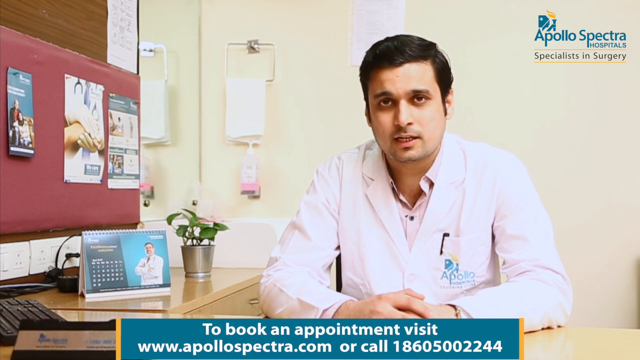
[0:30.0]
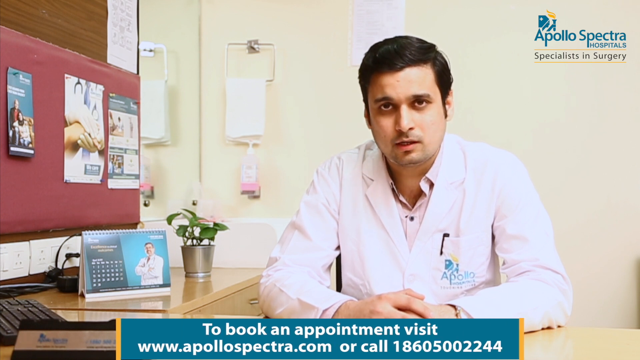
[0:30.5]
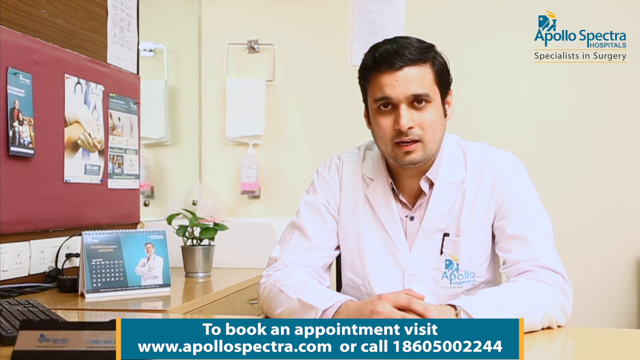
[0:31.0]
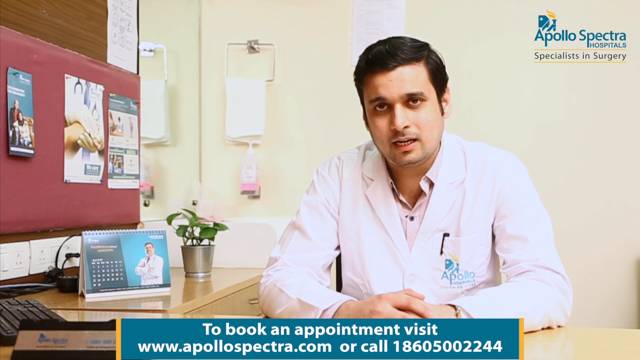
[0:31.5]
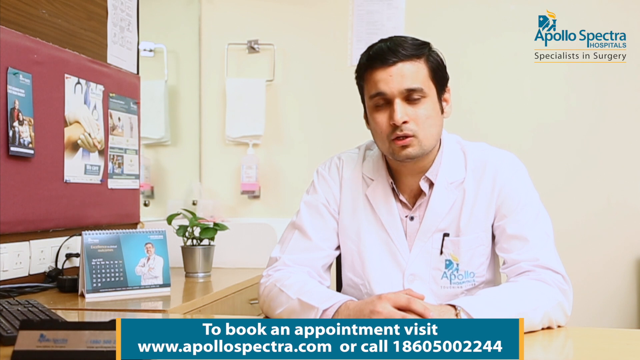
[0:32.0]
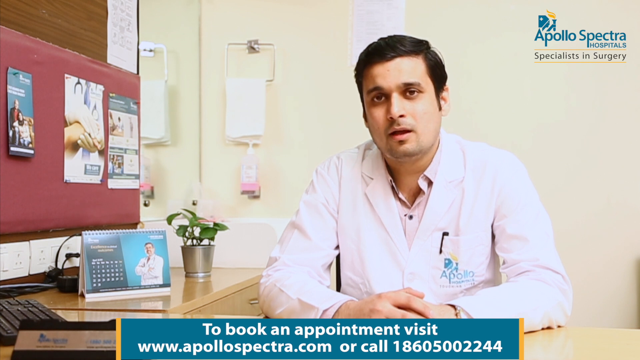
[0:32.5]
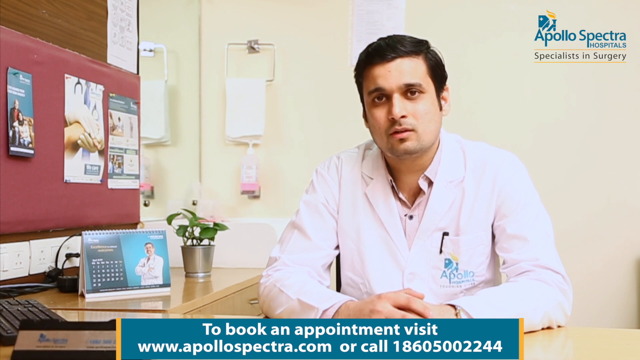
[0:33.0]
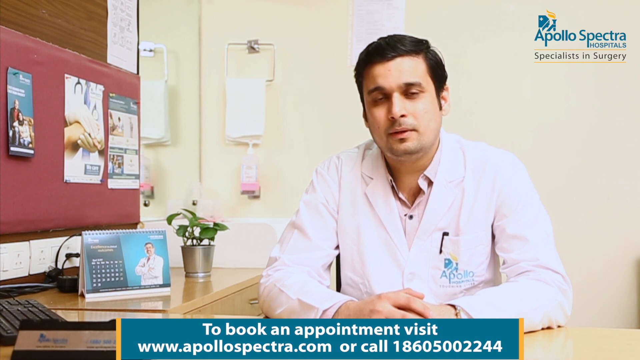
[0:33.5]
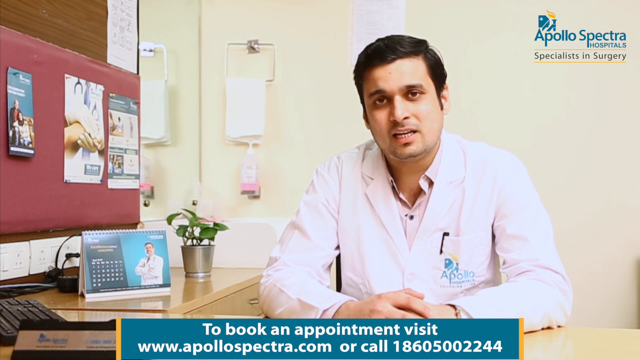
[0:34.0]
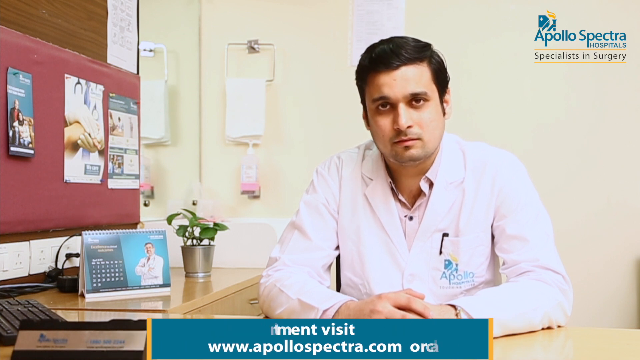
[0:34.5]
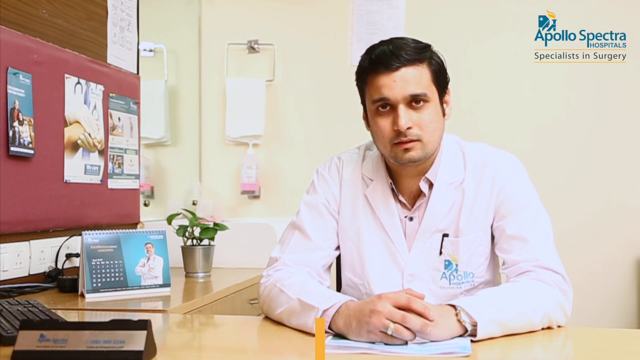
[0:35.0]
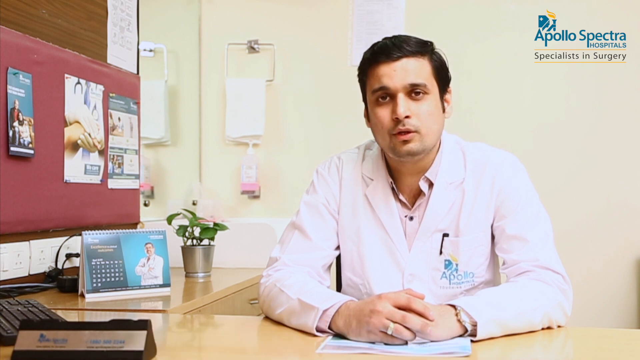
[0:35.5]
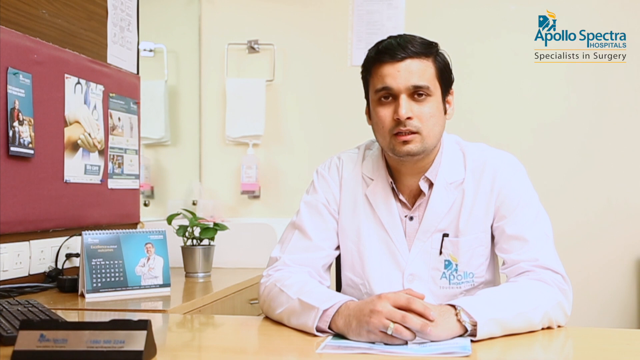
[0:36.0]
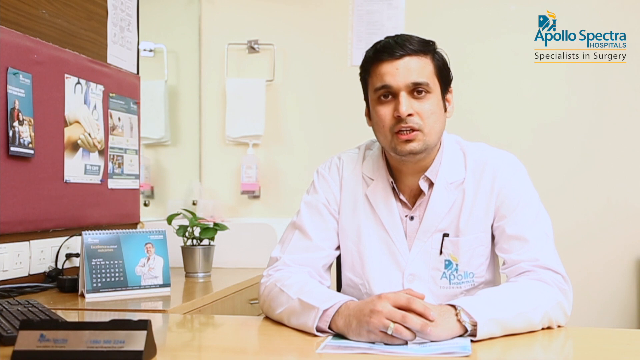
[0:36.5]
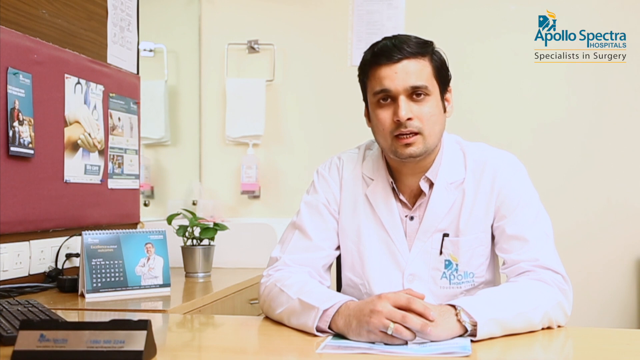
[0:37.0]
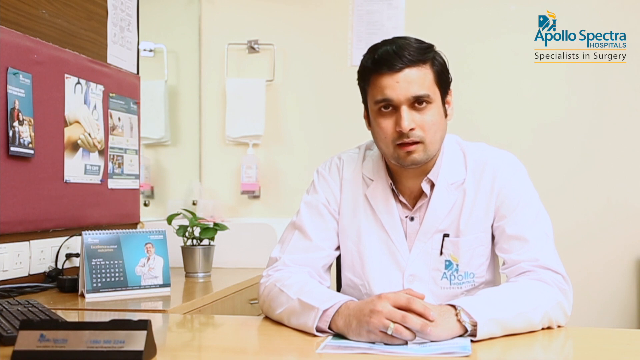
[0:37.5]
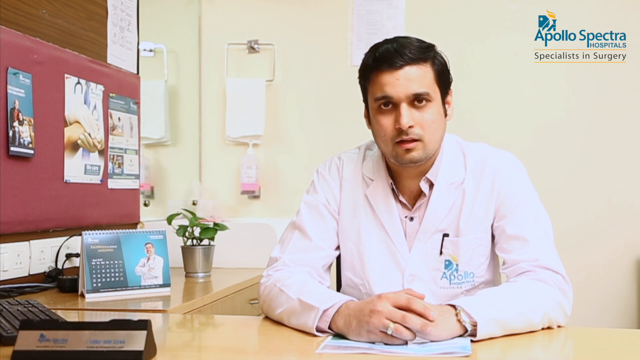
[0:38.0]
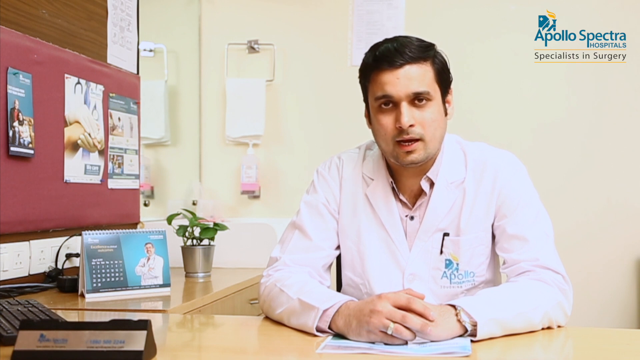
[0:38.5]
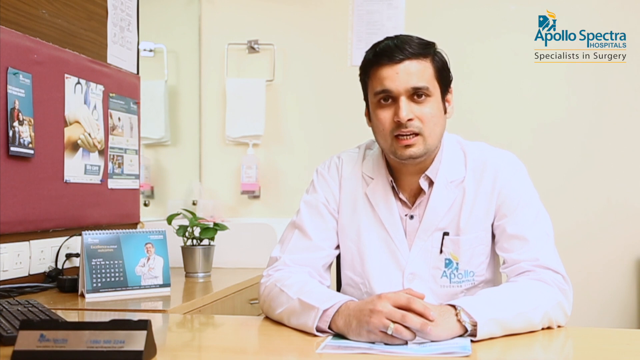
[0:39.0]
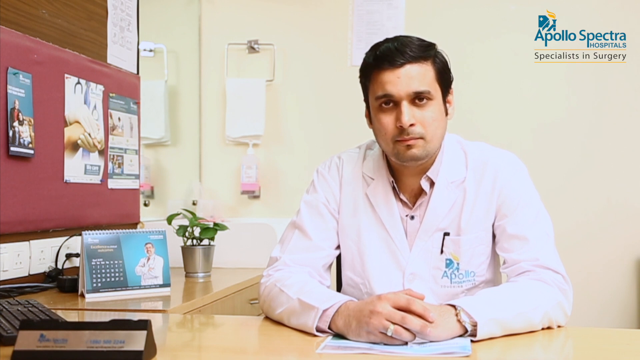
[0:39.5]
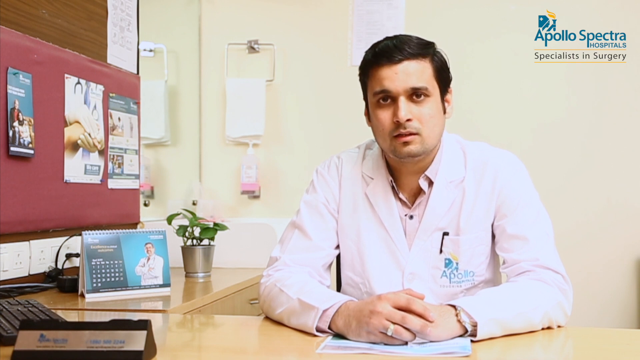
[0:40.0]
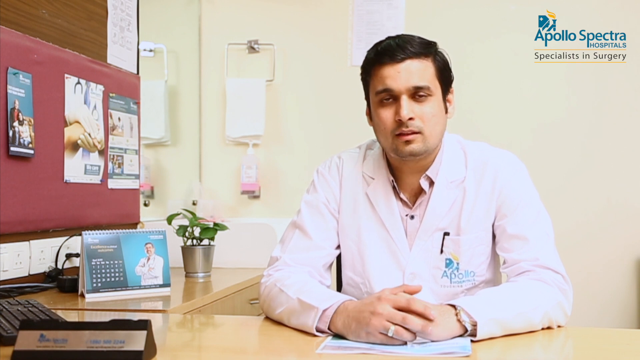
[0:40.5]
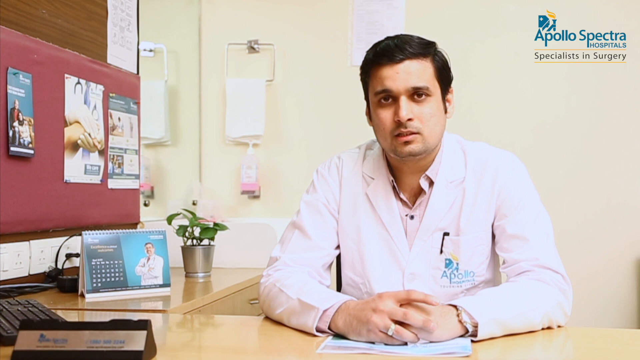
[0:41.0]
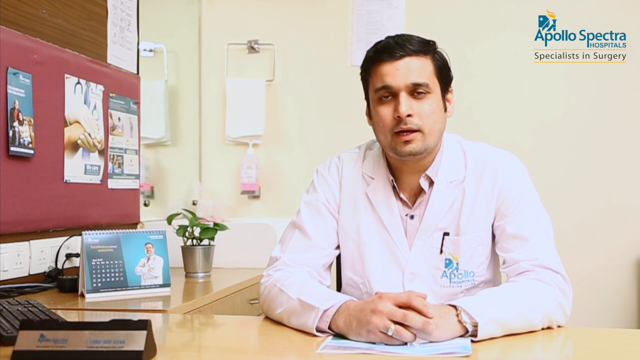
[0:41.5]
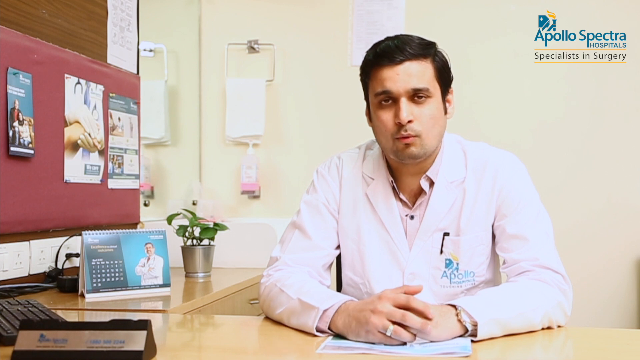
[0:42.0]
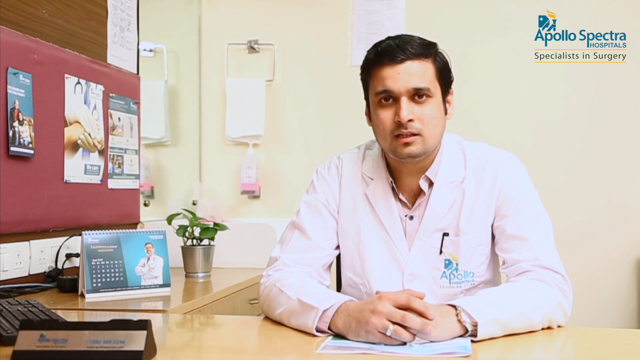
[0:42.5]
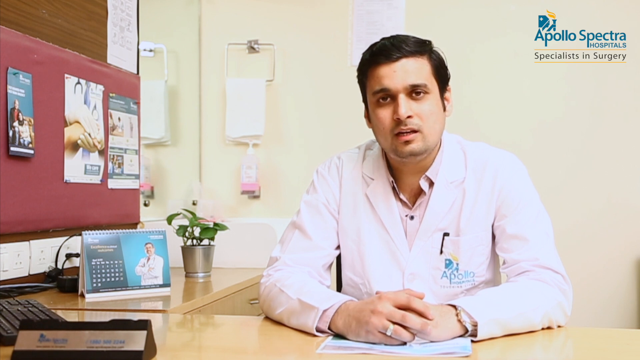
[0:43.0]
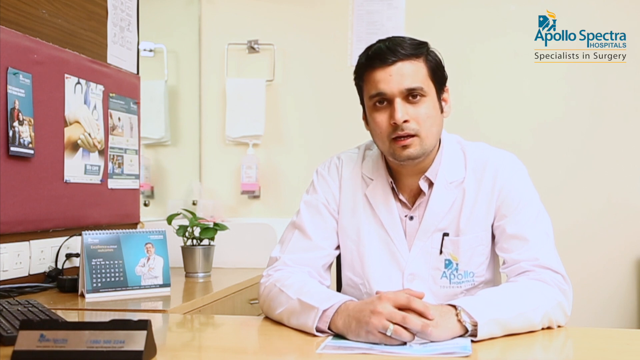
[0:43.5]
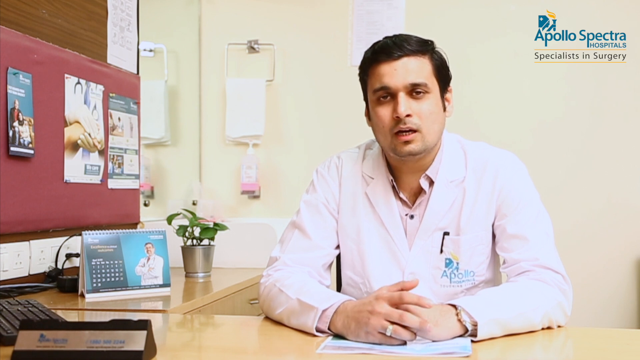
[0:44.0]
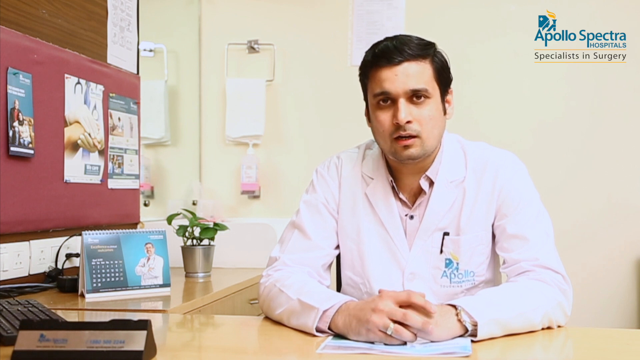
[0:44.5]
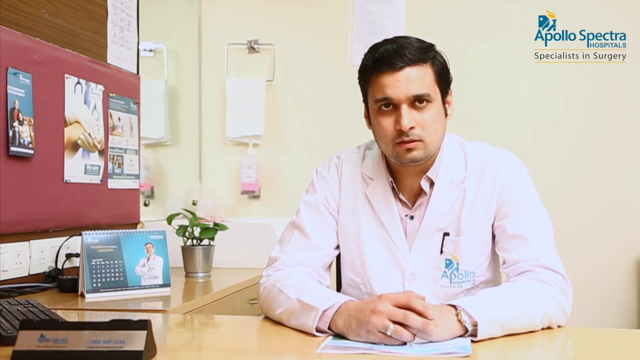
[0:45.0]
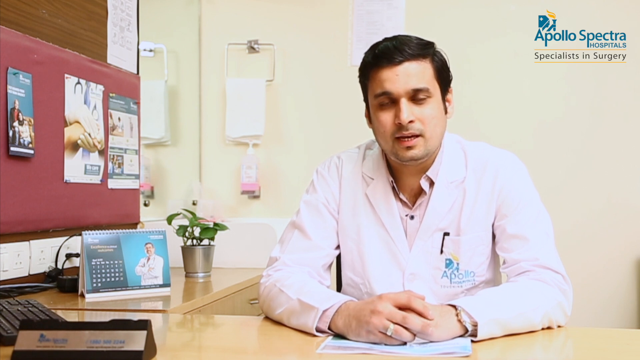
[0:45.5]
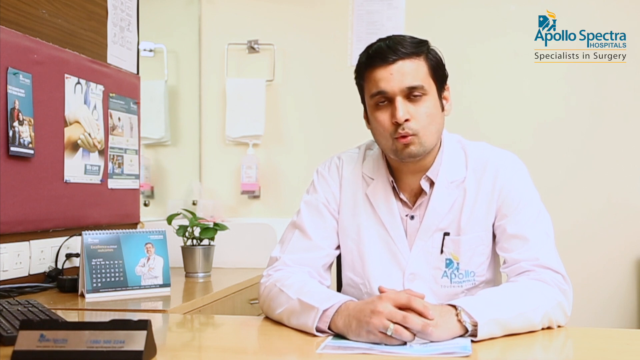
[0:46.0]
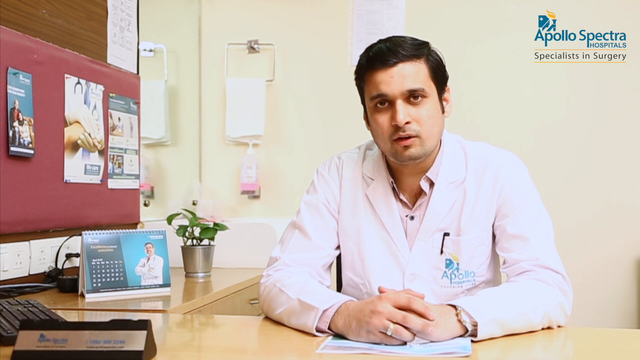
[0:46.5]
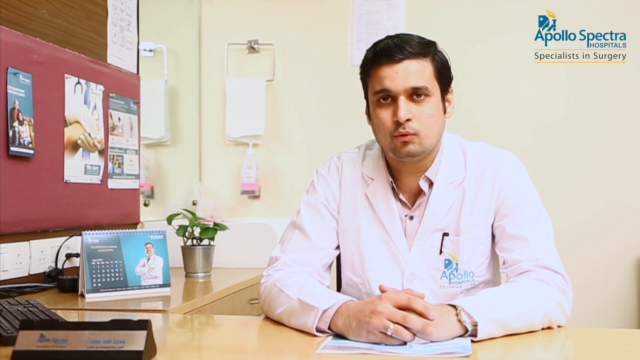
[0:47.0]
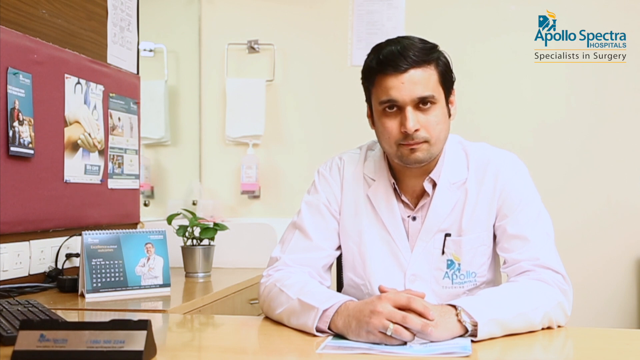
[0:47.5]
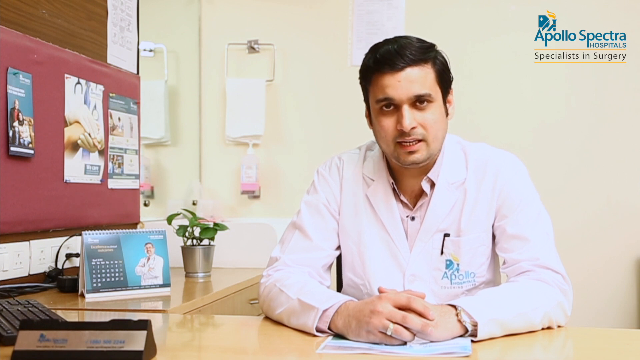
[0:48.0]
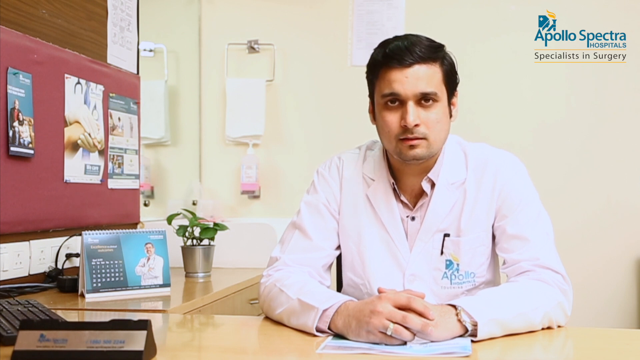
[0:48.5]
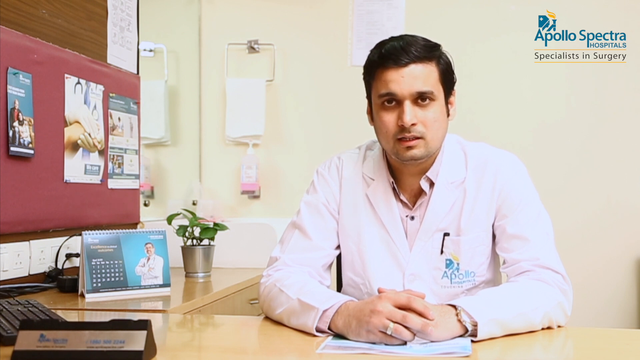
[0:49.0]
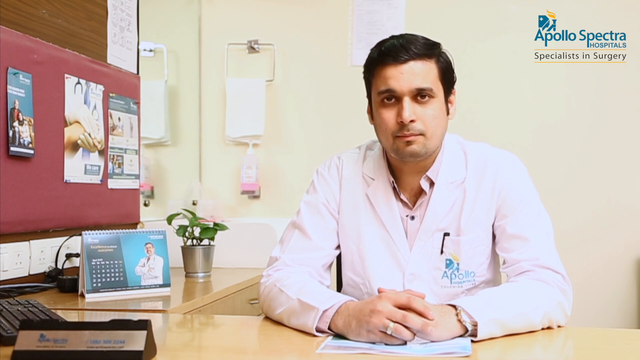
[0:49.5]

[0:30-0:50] The graphic about booking an appointment disappears from the bottom of the screen, and the doctor continues to talk. A nameplate is located to his left from the viewer's viewpoint, and there is a black computer keyboard. To the left is a little easel with information on it, which looks like a calendar possibly created by a pharmaceutical company. In the background is a small plant in a silver container. To the left there are some electrical outlets near the desk; above them is a red bulletin board with some informational things attached to it, and above that is a wood-colored board with a piece of paper on it. The doctor's lab coat says "Apollo Spectra Hospitals" on it, and he crosses his hands on a piece of paper on the desk he sits in front of.